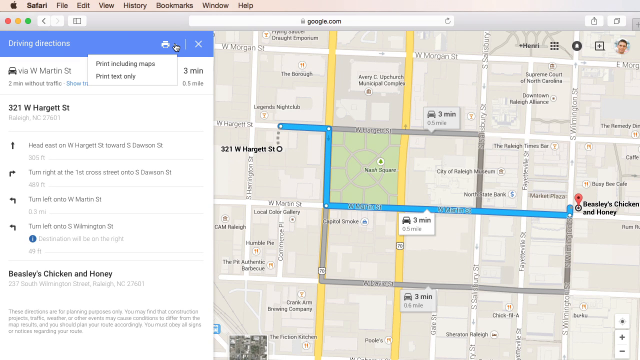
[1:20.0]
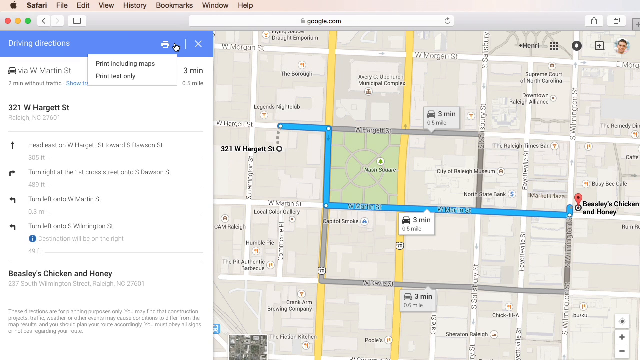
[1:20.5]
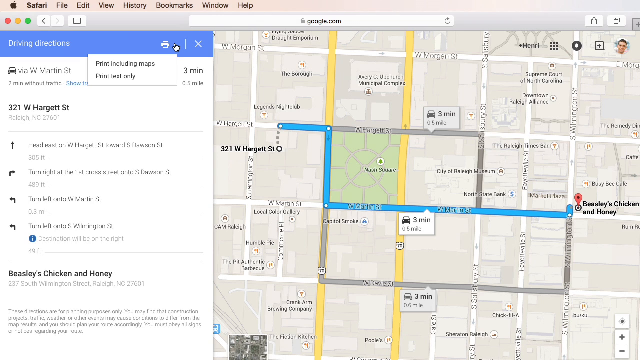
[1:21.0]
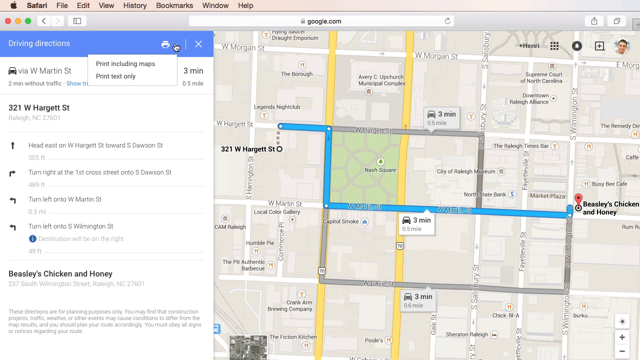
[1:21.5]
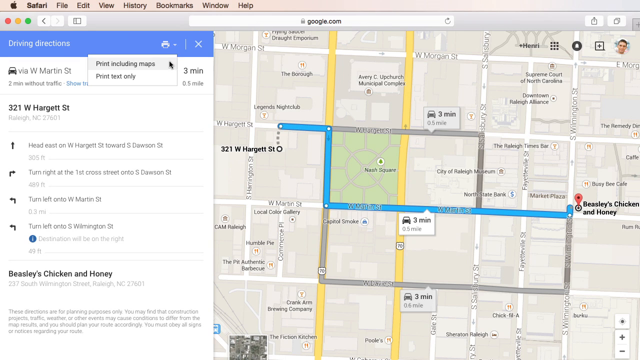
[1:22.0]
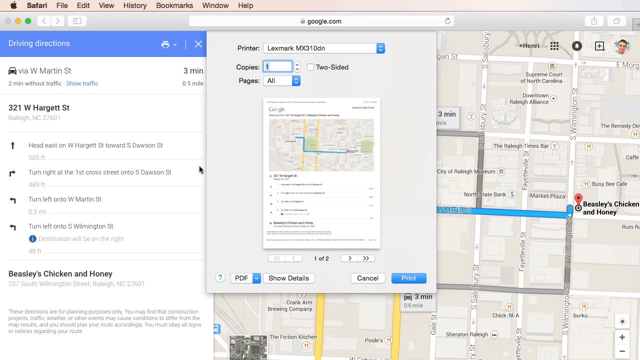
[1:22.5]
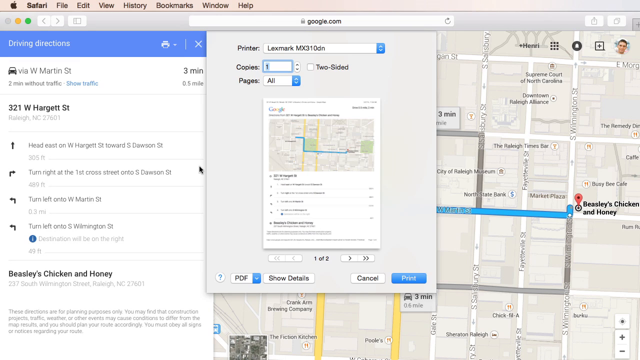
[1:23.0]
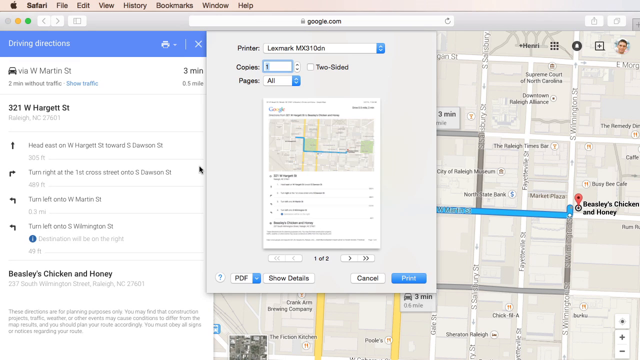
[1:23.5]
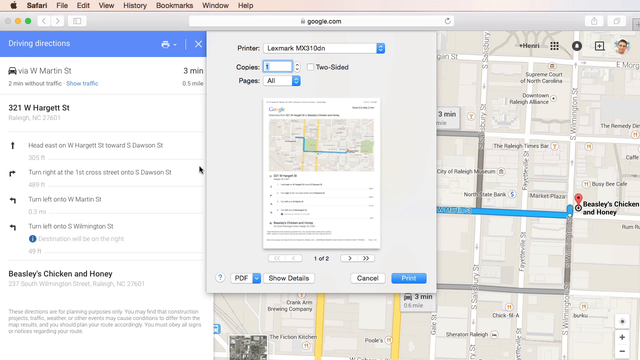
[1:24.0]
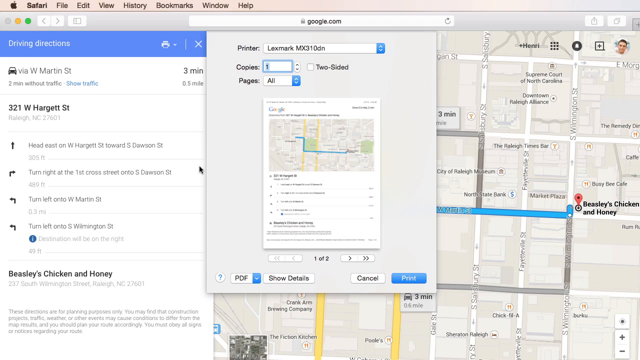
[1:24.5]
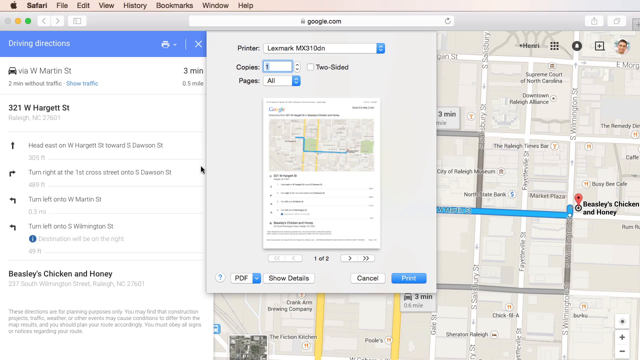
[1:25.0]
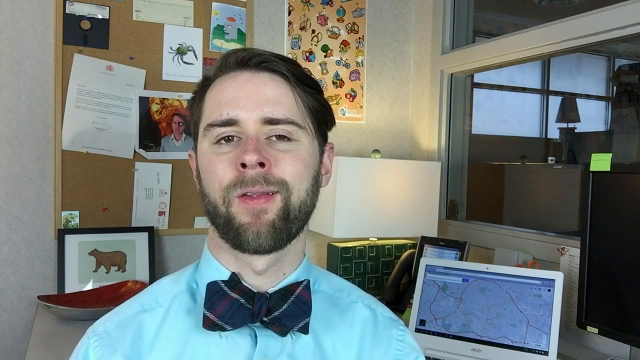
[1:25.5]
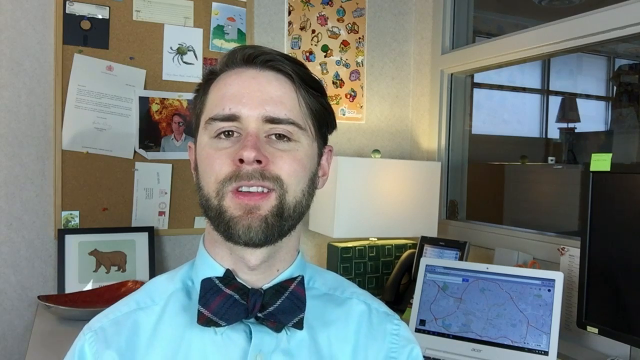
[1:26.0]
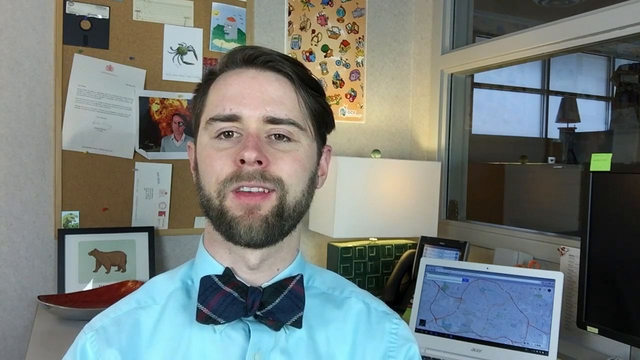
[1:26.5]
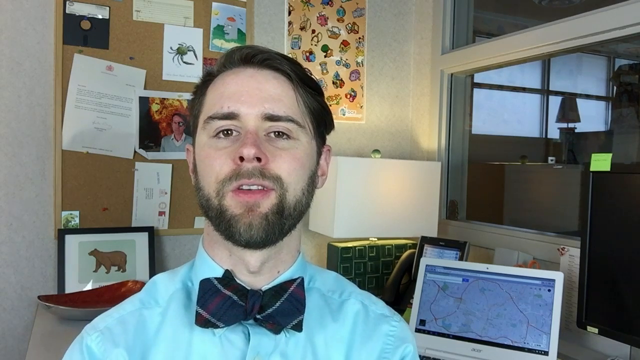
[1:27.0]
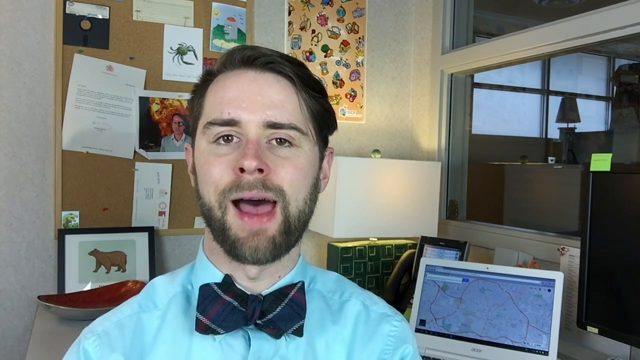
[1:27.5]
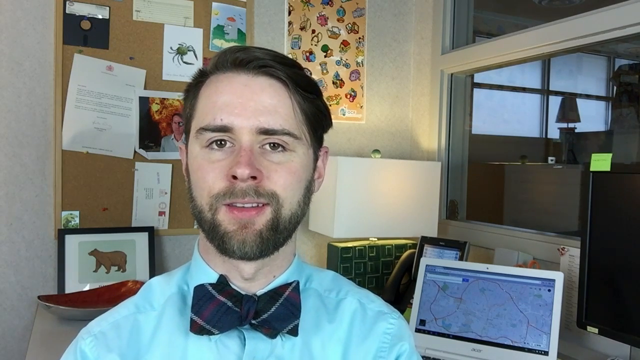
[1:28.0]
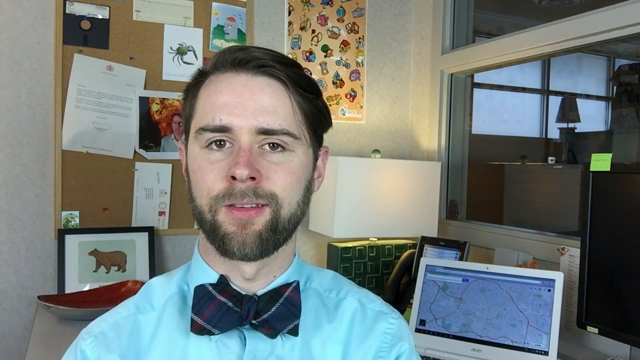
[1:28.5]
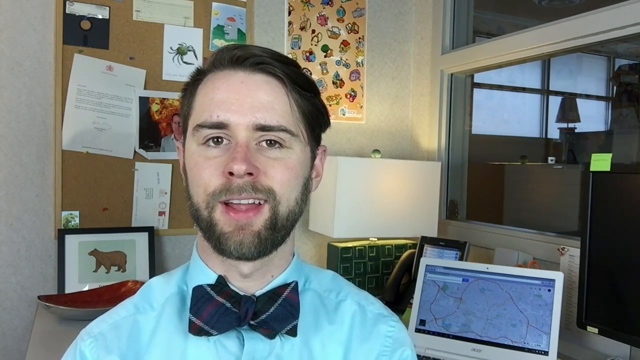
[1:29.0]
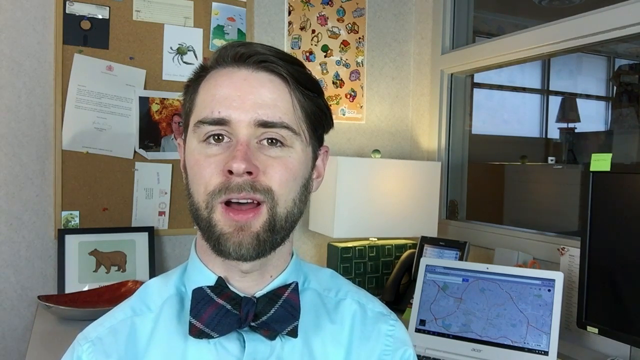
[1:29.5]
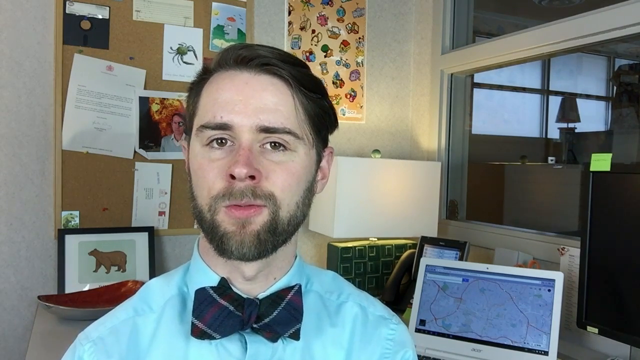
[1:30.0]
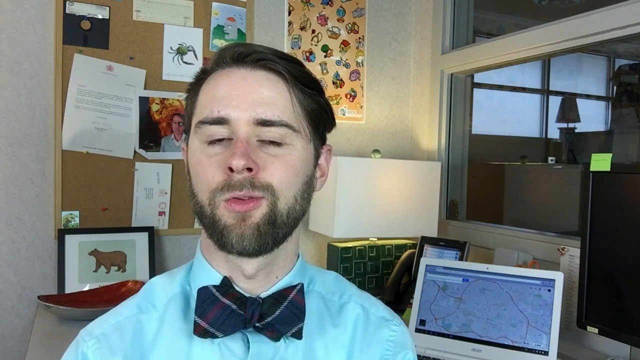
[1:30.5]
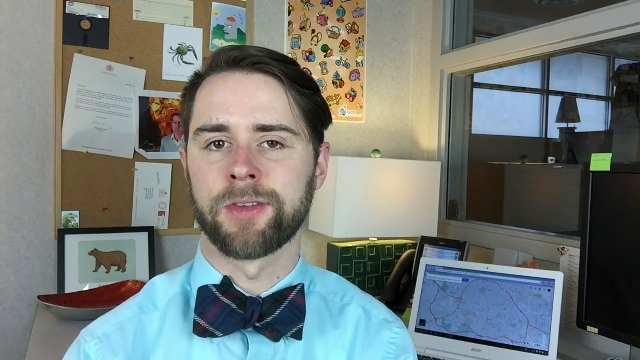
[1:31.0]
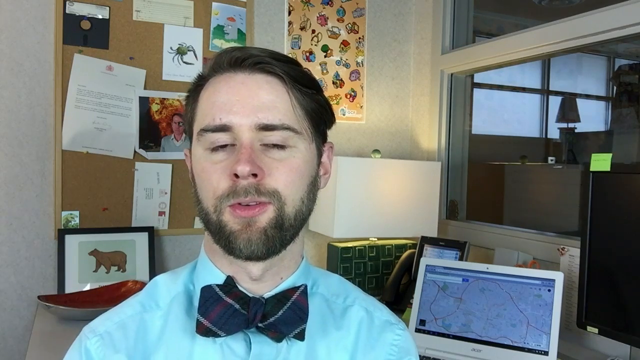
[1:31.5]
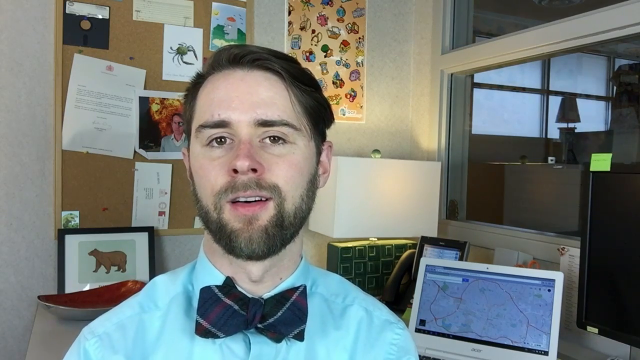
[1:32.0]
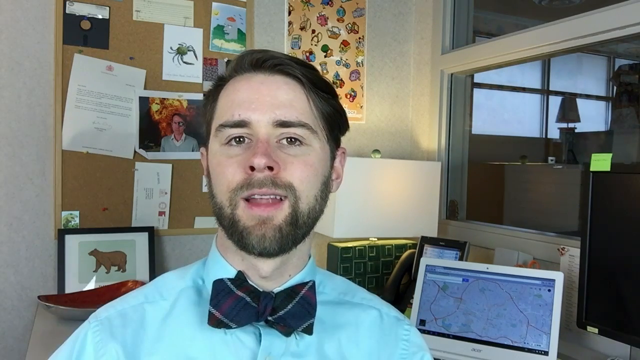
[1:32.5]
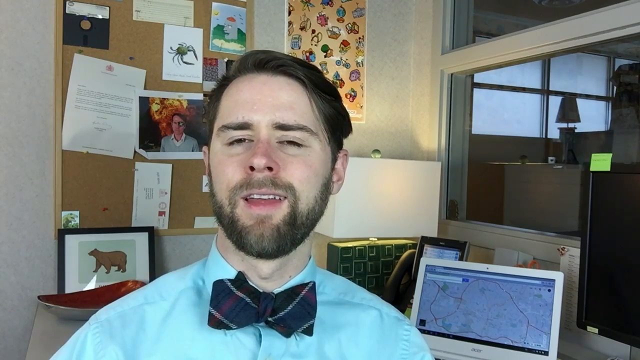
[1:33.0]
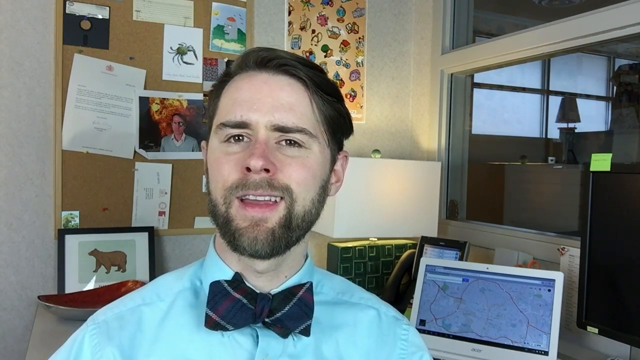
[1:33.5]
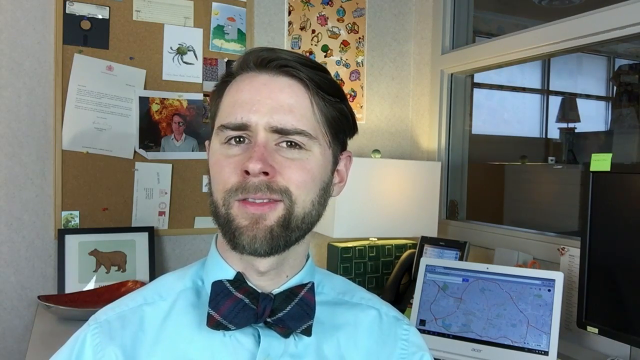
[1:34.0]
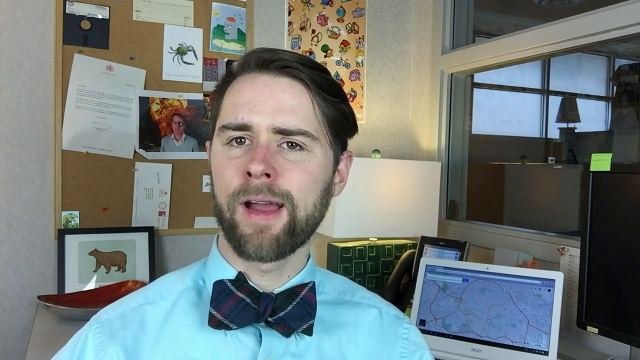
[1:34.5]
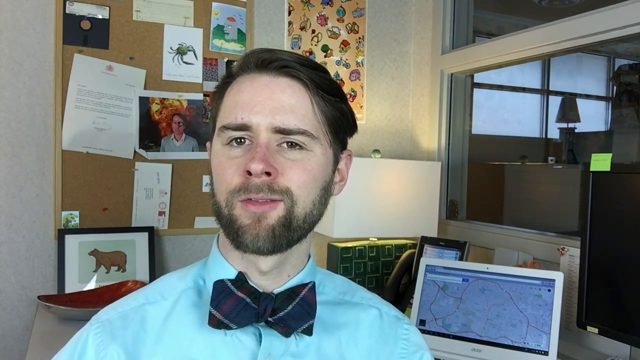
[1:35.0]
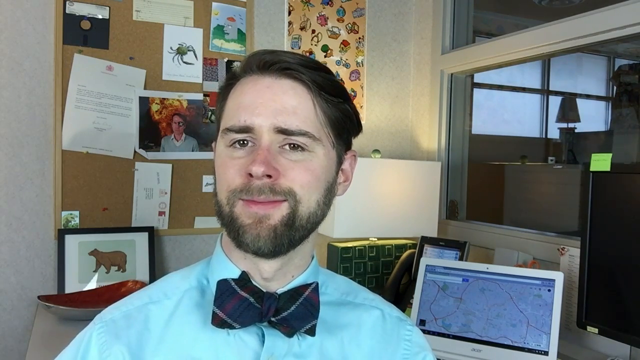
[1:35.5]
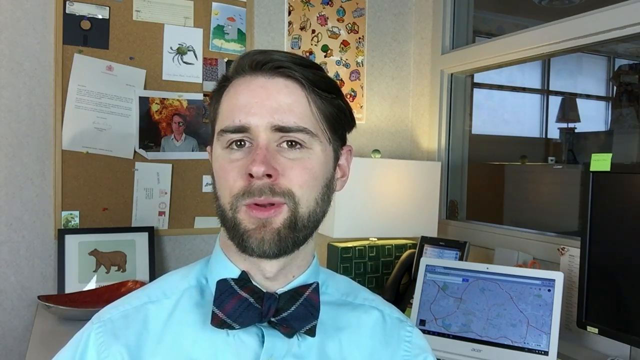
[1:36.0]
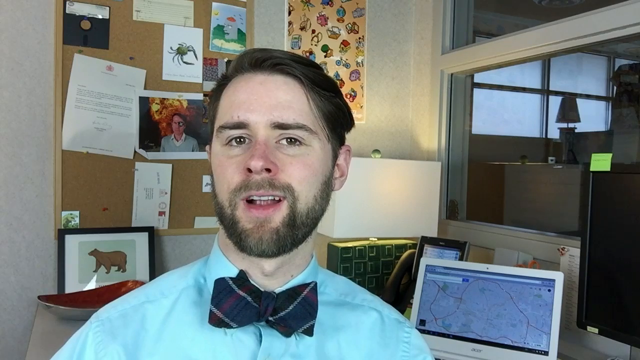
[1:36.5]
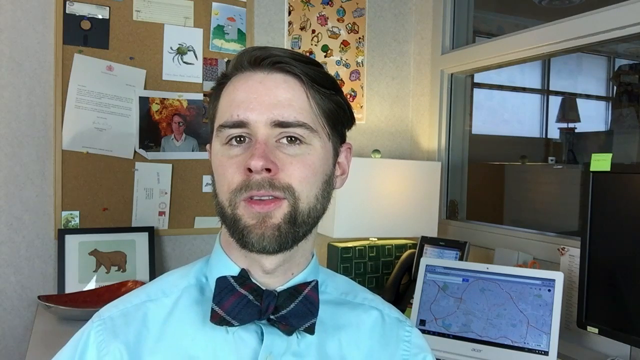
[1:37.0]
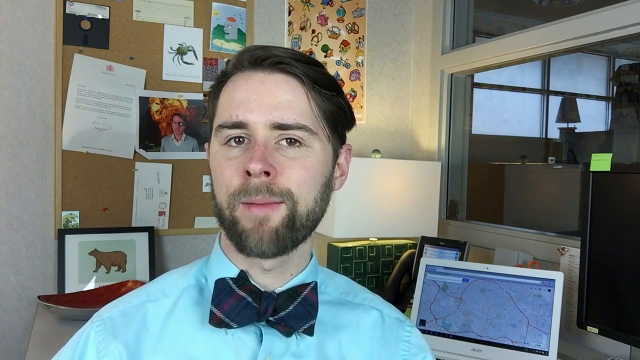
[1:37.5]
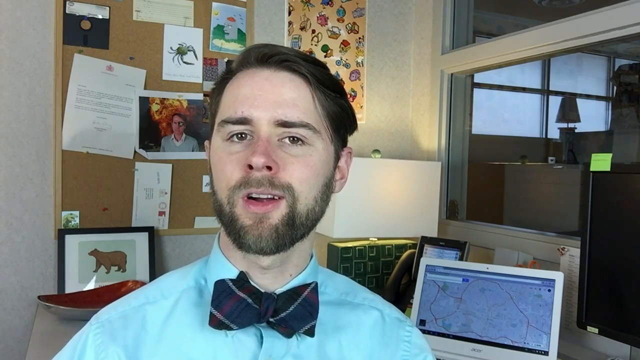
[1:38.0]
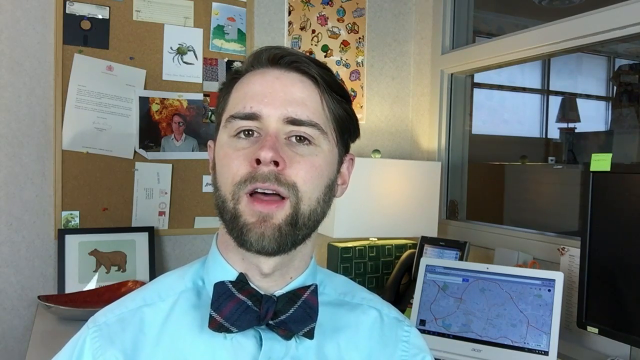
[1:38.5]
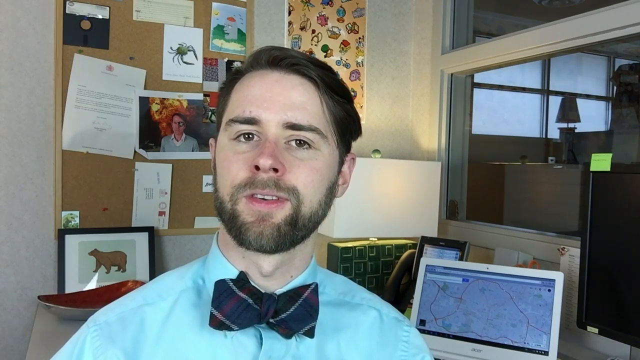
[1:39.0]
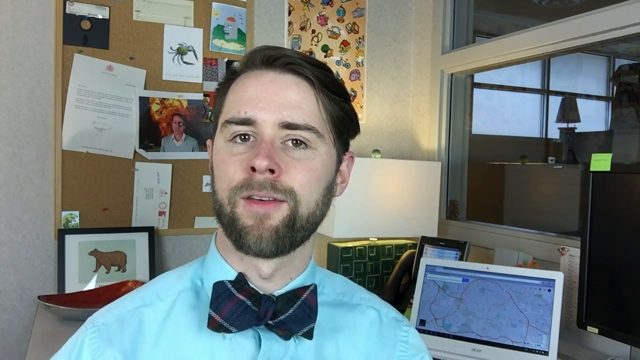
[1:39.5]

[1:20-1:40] The Google Maps screencast of Raleigh, North Carolina shows a route between 321 West Hargrett Street and Beasley's Chicken and Honey. A list of directions on screen starts at 321 West Hargrett Street, heads east on West Hargrett Street toward South Dawson Street, turns right at the first corner street onto South Dawson Street, turns left onto West Martin Street, and finally turns left onto South Wilmington Street, with the destination, Beasley's Chicken and Honey, on the right. Google Maps then opens a printer option to print the list of directions. The video cuts back to the man sitting at a desk, wearing a blue shirt and a black and white bow tie, with neatly groomed black hair and a neatly trimmed beard. Behind him are a computer showing Google Maps, a bulletin board, a poster, and a window. He talks to the viewer while sitting at his desk.